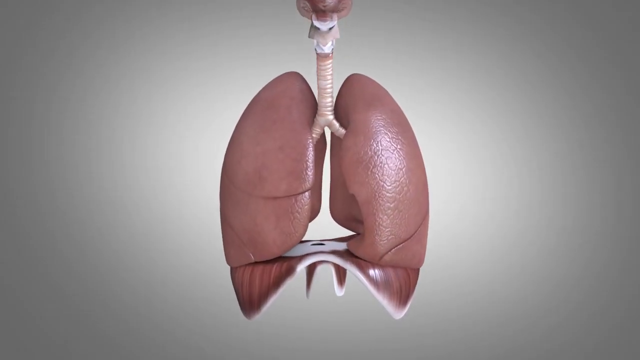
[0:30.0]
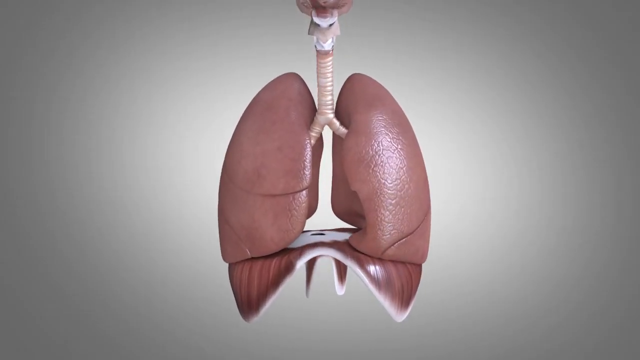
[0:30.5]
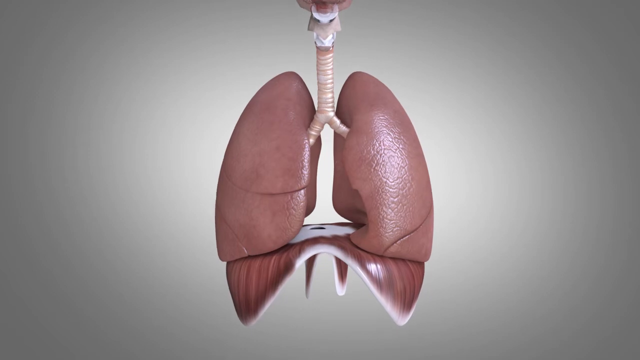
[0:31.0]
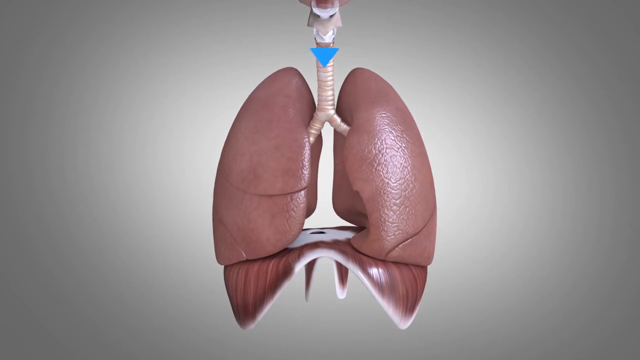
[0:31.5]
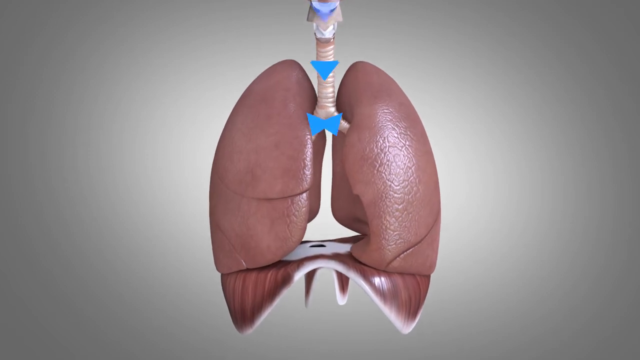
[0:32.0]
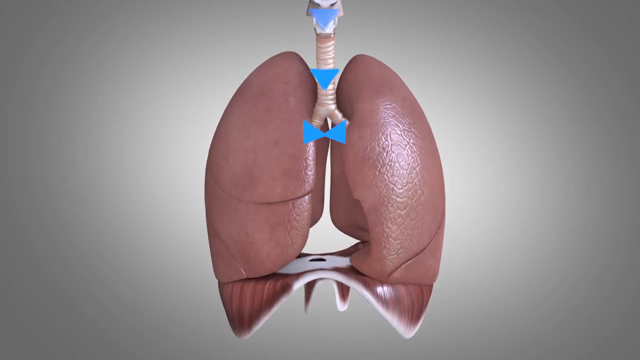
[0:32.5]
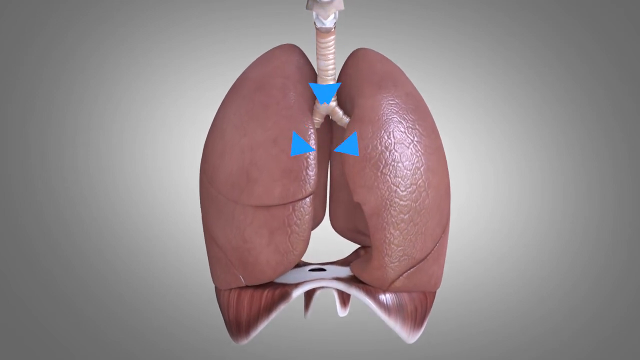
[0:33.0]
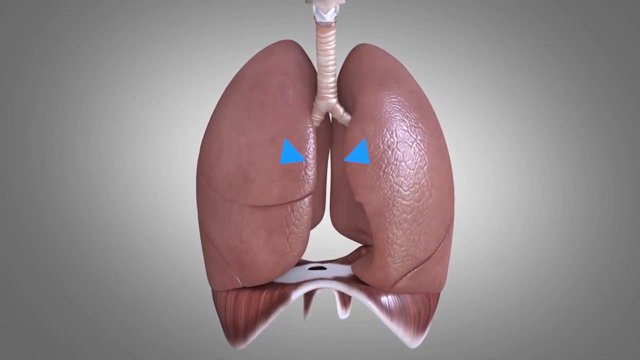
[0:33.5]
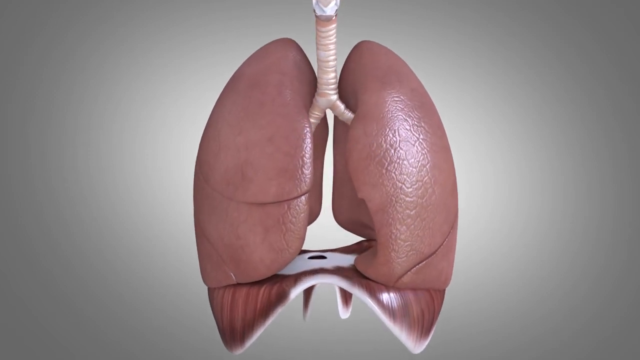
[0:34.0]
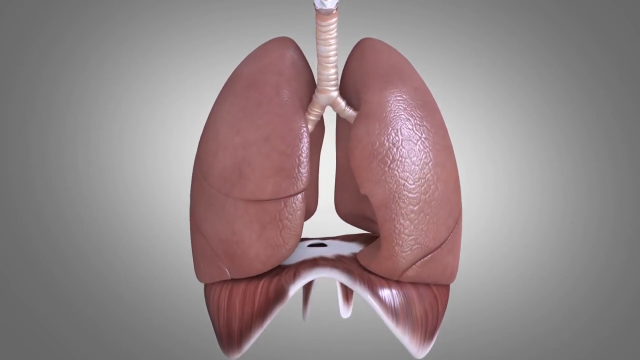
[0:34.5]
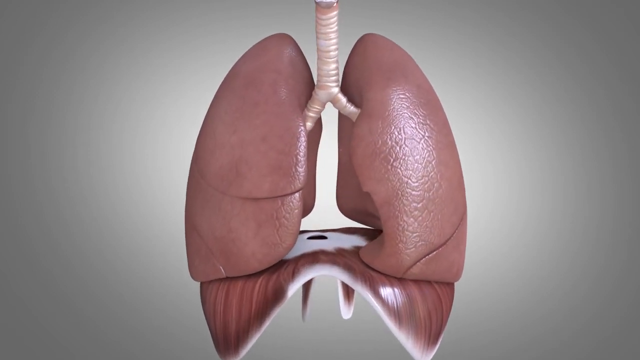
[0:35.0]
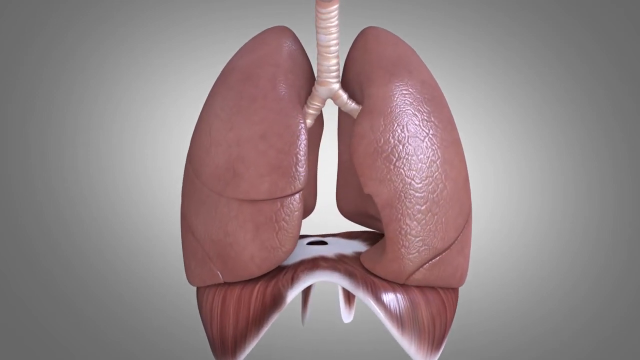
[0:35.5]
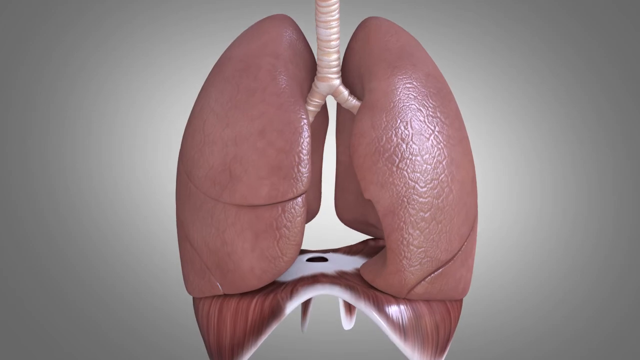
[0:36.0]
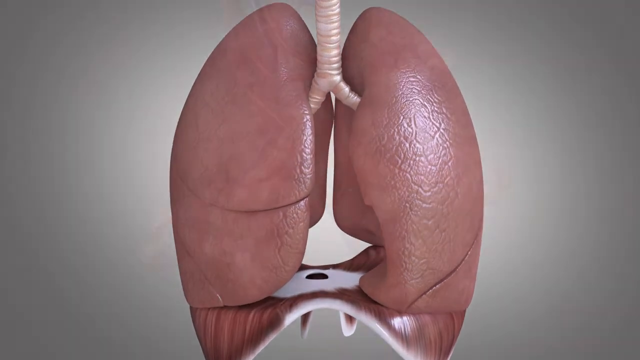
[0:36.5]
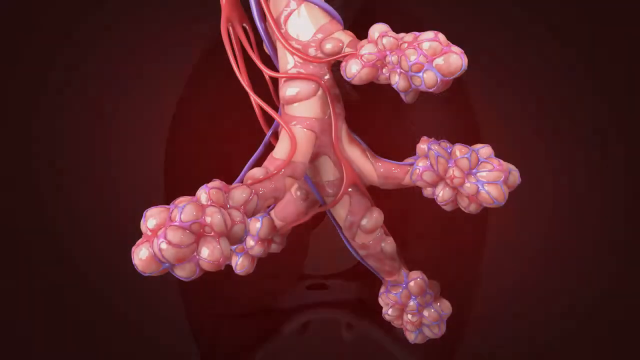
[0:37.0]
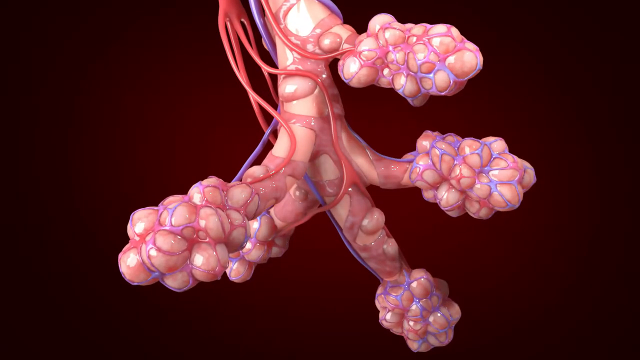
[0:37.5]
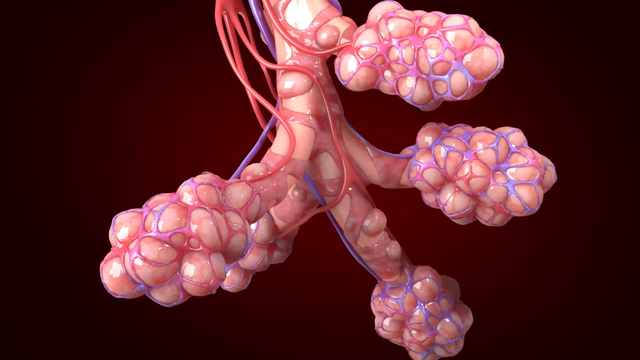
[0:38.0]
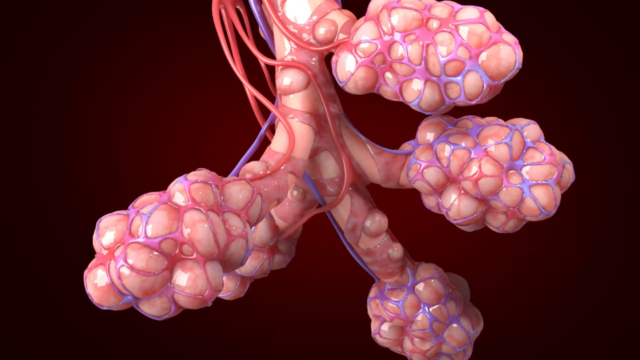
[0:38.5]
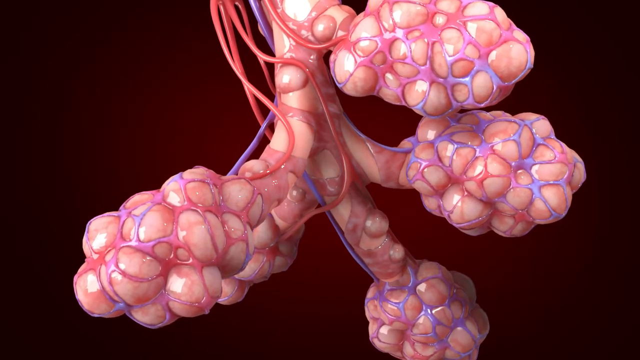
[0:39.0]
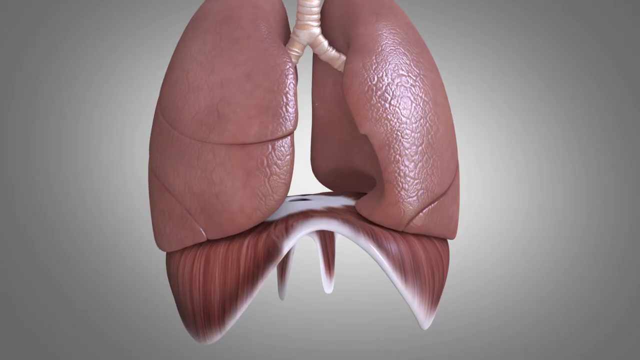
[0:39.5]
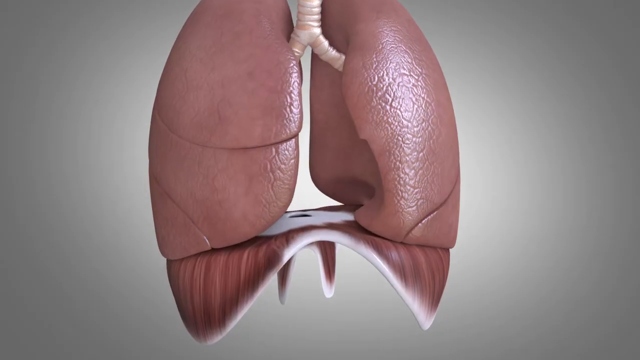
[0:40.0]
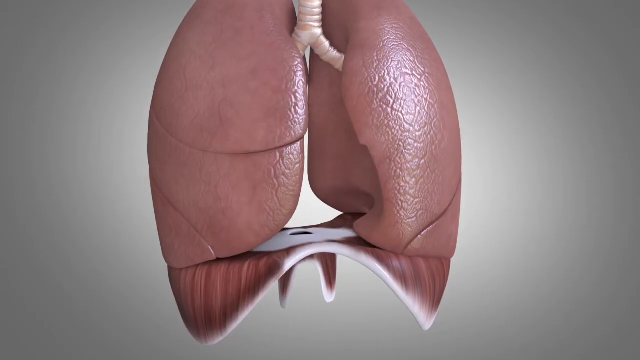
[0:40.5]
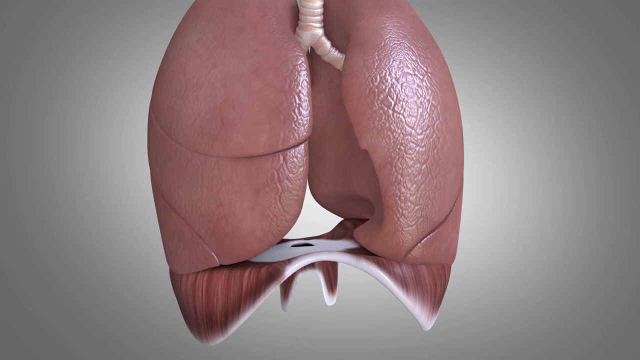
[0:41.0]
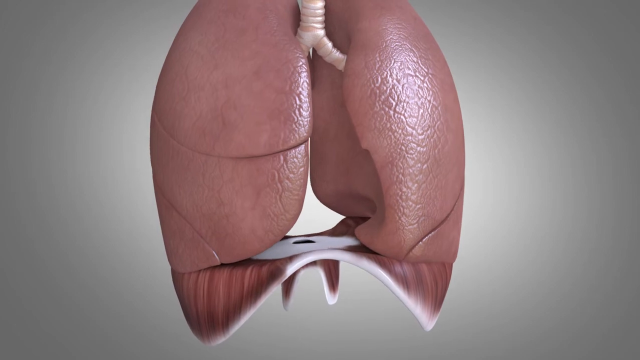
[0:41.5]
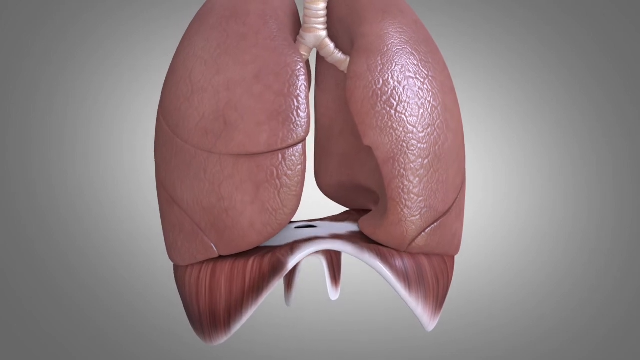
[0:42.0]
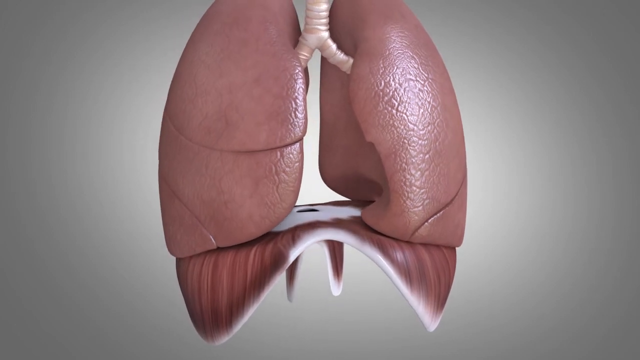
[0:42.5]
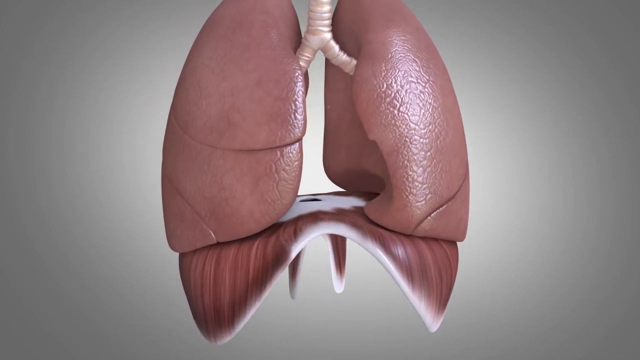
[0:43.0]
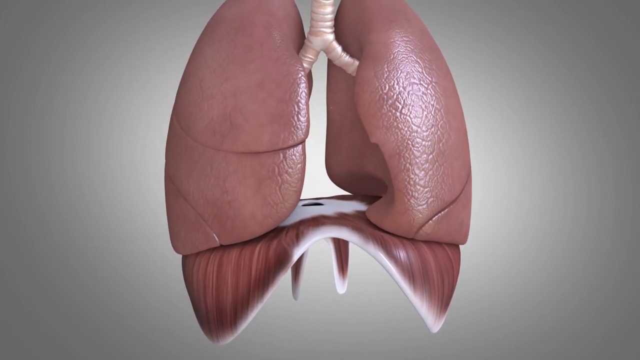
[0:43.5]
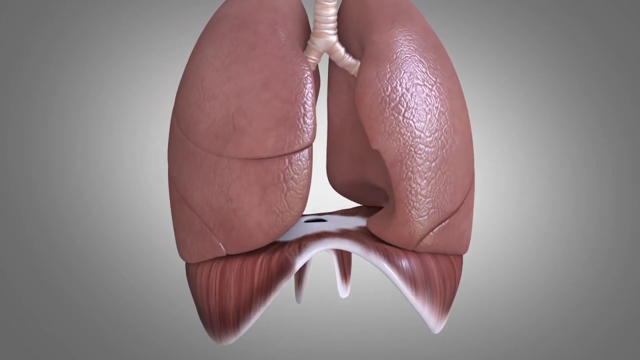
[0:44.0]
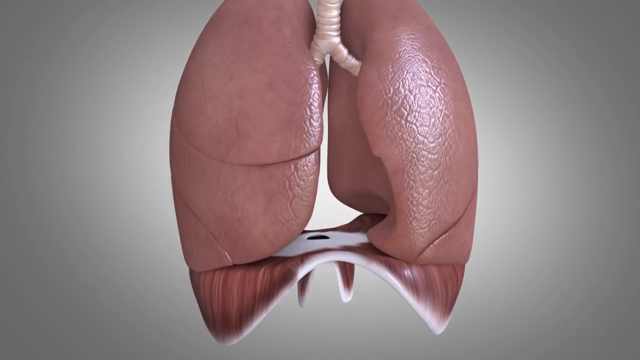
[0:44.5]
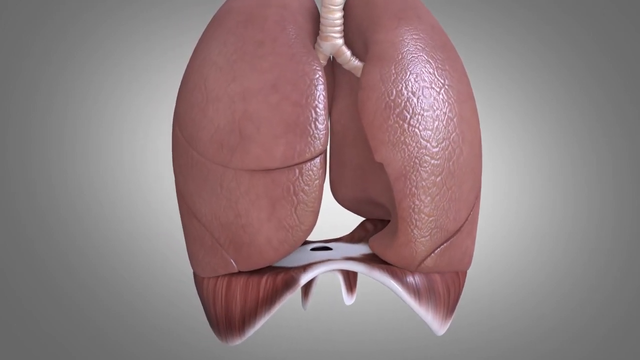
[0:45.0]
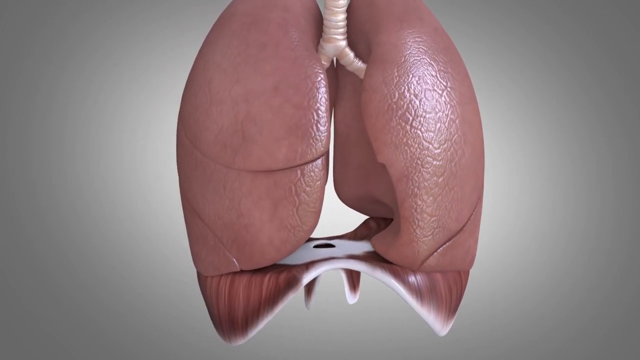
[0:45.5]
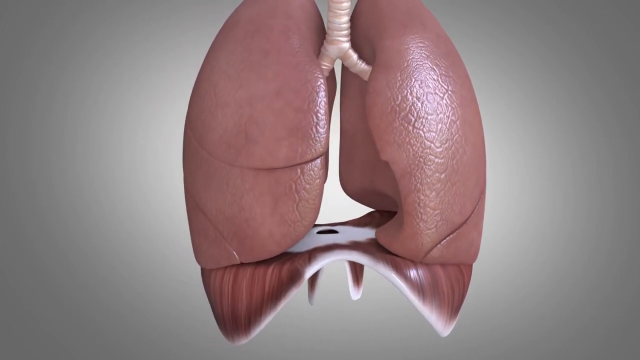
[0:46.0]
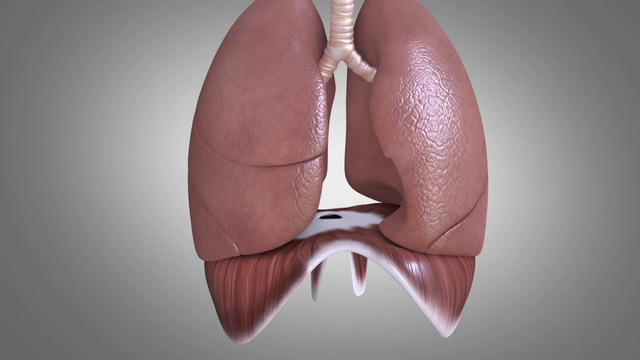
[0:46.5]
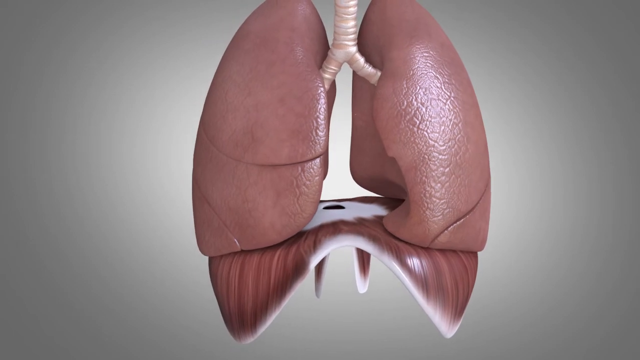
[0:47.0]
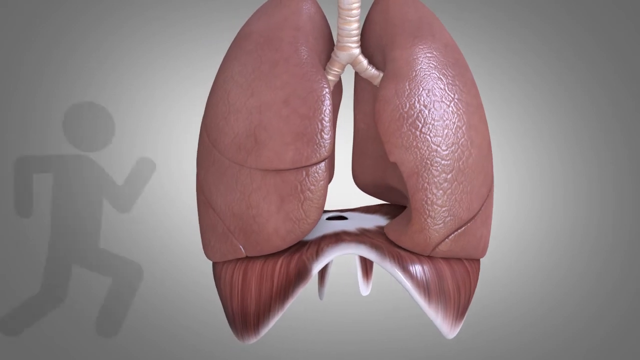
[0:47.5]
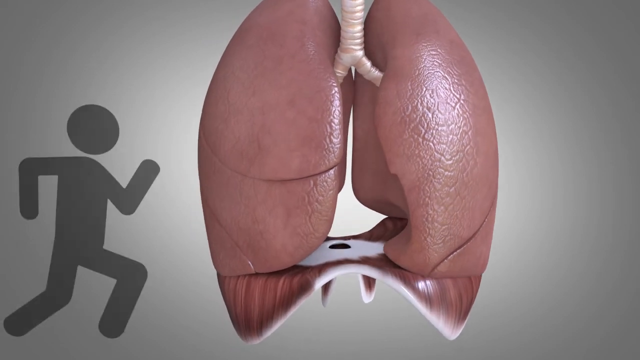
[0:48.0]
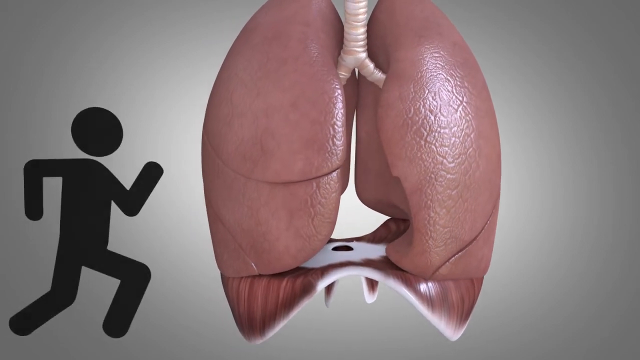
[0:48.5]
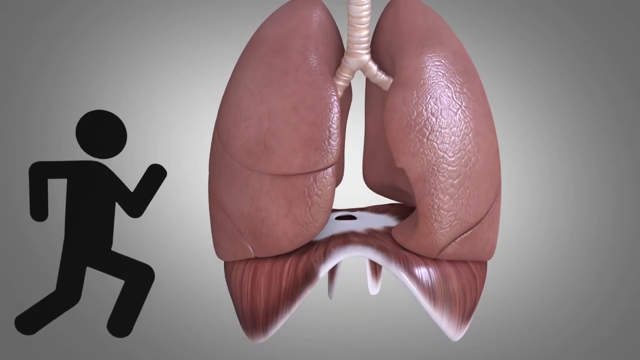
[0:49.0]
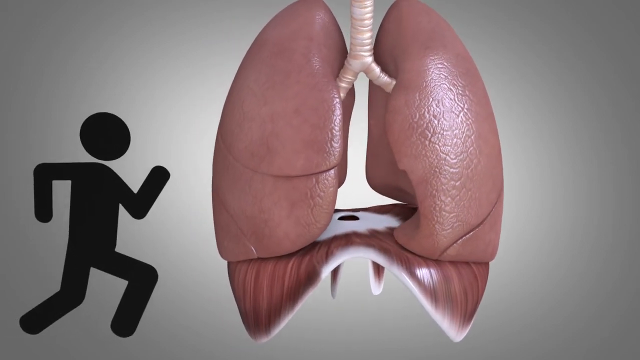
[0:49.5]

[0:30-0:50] A CGI animation shows a pair of human lungs at work. The lungs appear pink, with the pink diaphragm below them. The diaphragm is a flat muscle with flaps that hang down on both sides, and it appears to be shiny. The lungs expand and contract, and the diaphragm raises and lowers as they do. A graphic of blue arrows coming down the windpipe and out into the lungs appears briefly. Next, a graphic shows the interior air sacs of the lungs, which look like small pink sacs extending from a central stem, surrounded by purple and red veins; they too expand. The graphic of the lungs expanding and contracting returns, and a silhouette of a person running appears on the left of the screen. The contraction of the lungs appears to speed up, as if someone is breathing more heavily during exercise.